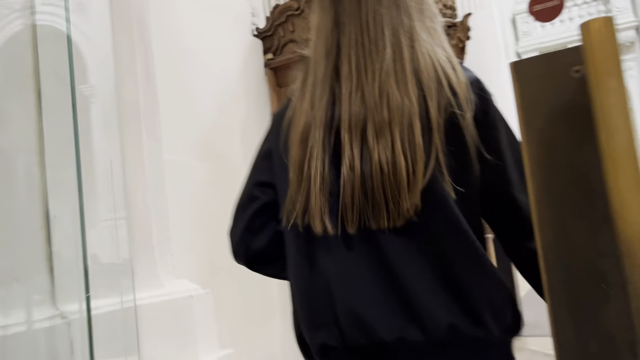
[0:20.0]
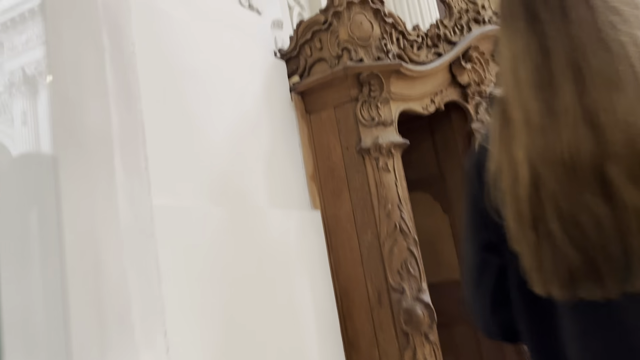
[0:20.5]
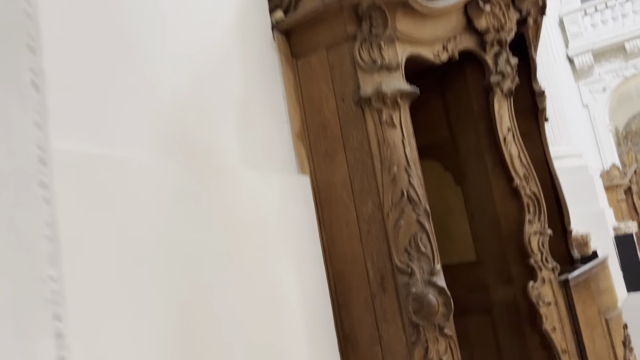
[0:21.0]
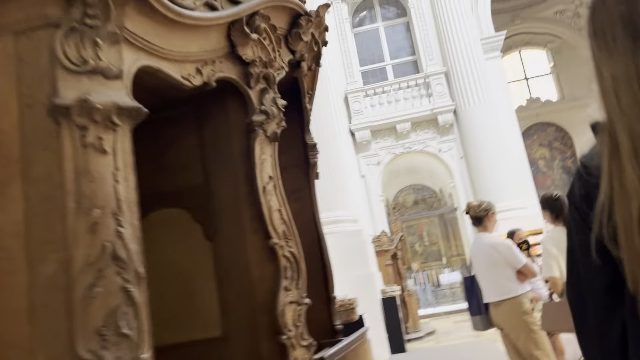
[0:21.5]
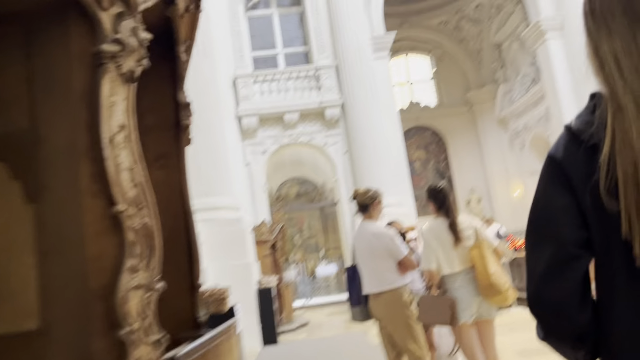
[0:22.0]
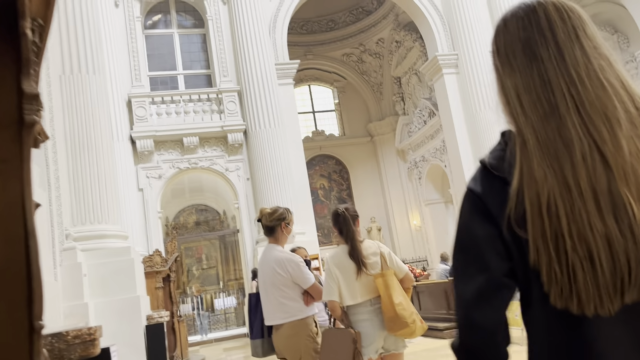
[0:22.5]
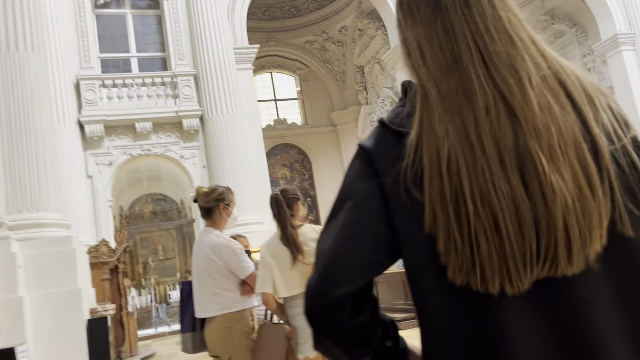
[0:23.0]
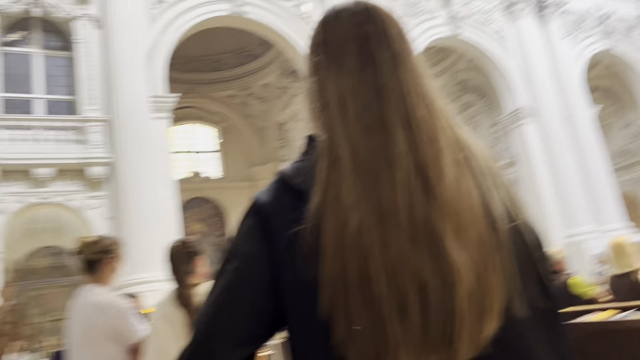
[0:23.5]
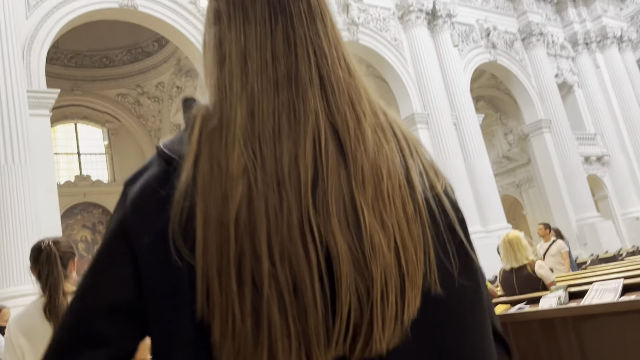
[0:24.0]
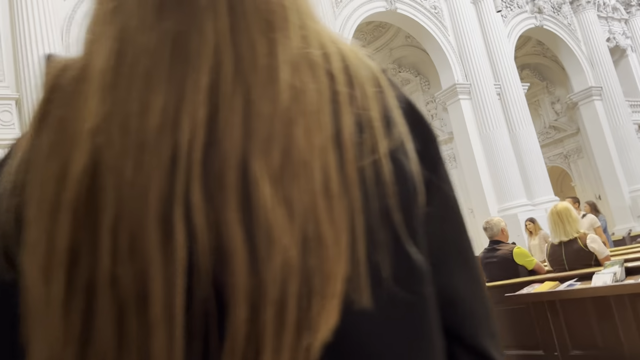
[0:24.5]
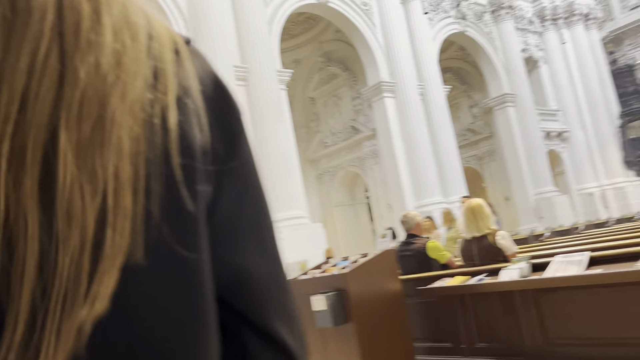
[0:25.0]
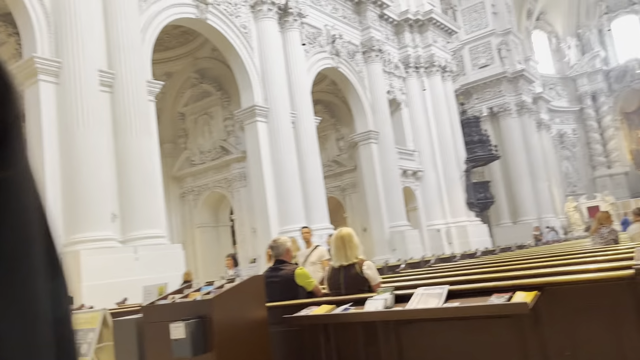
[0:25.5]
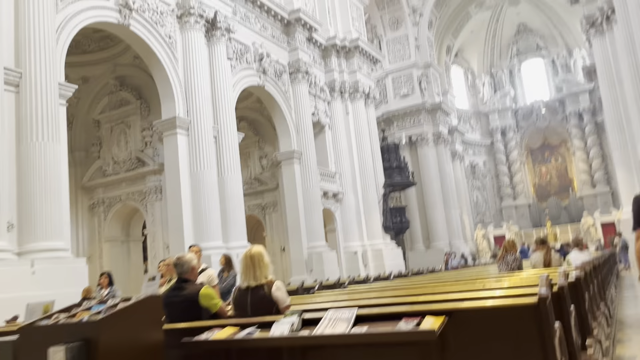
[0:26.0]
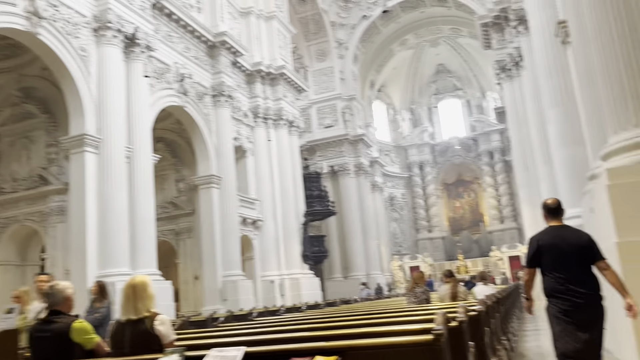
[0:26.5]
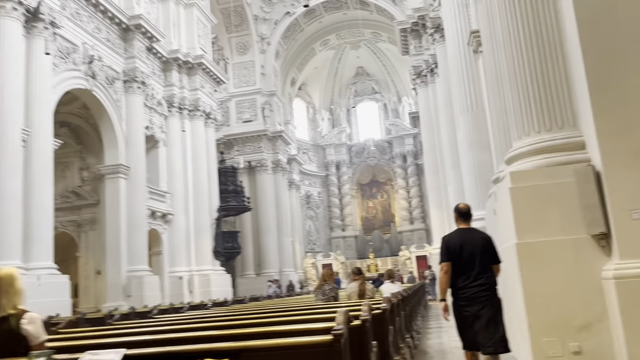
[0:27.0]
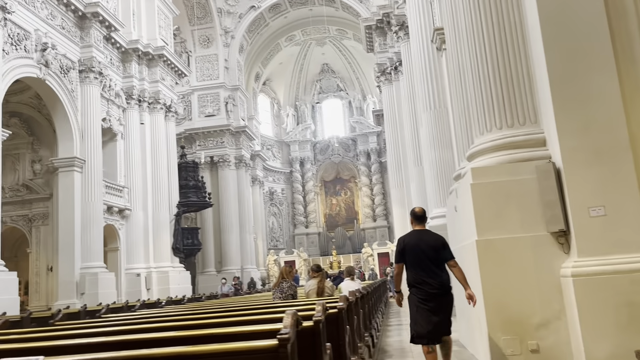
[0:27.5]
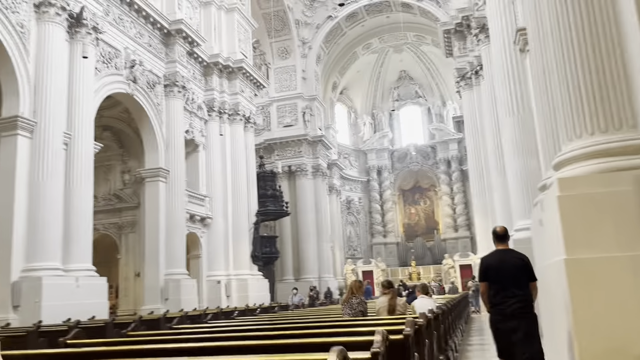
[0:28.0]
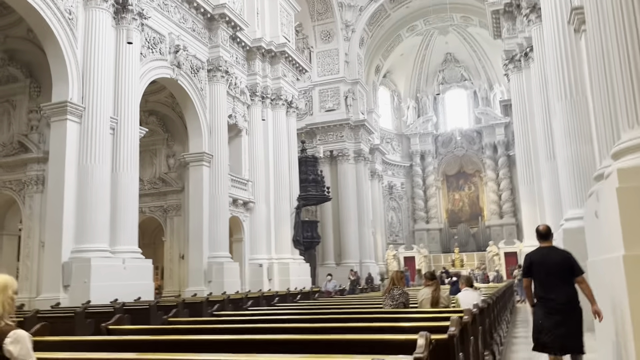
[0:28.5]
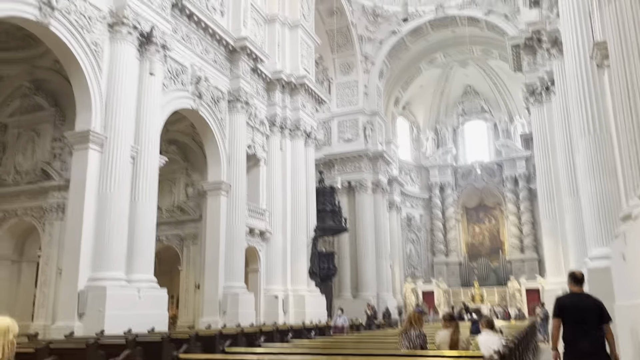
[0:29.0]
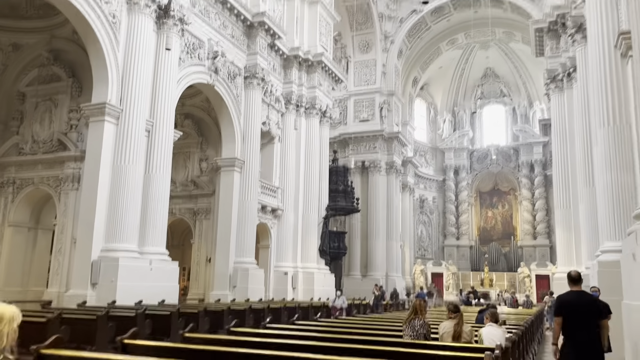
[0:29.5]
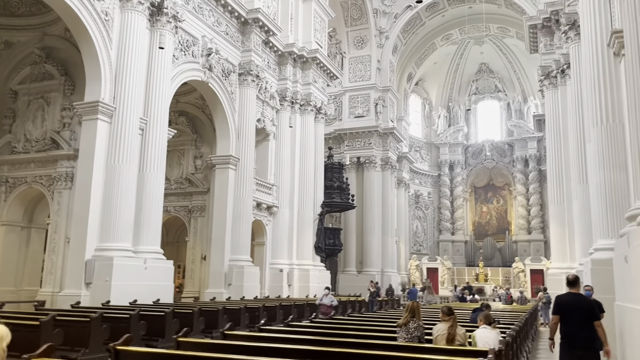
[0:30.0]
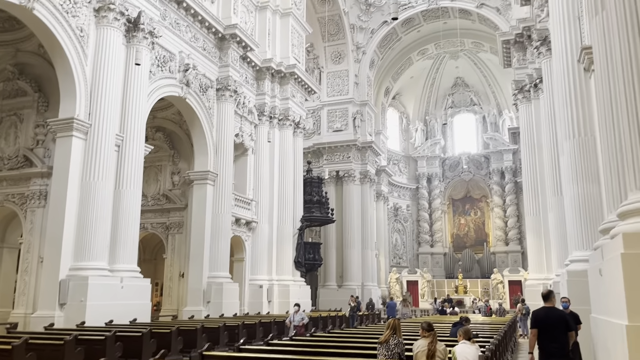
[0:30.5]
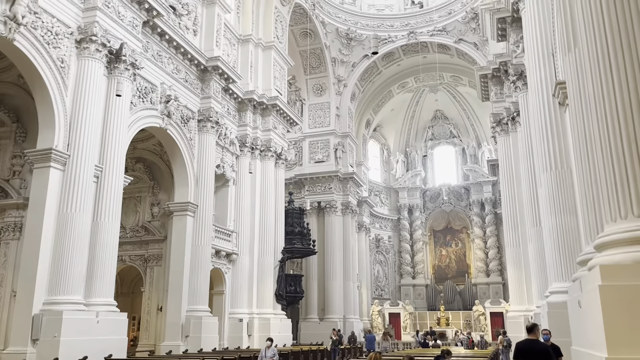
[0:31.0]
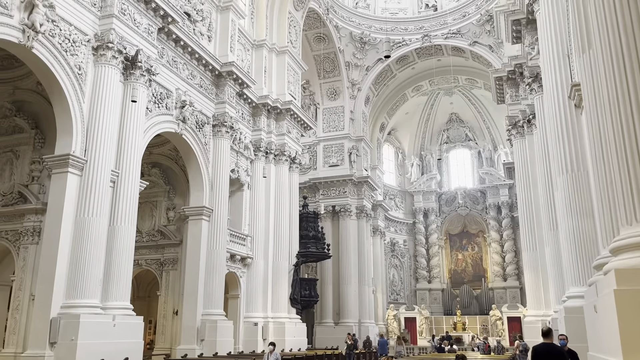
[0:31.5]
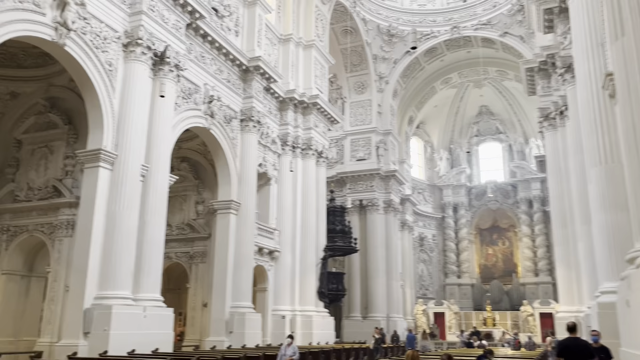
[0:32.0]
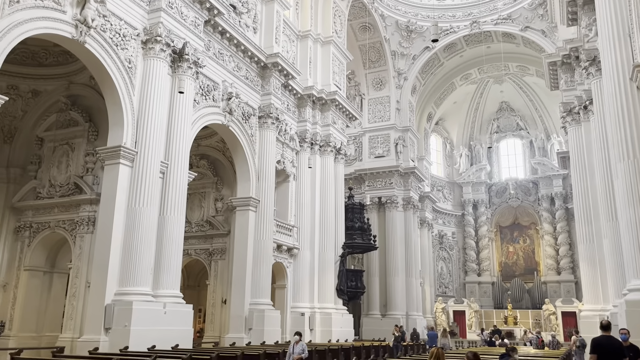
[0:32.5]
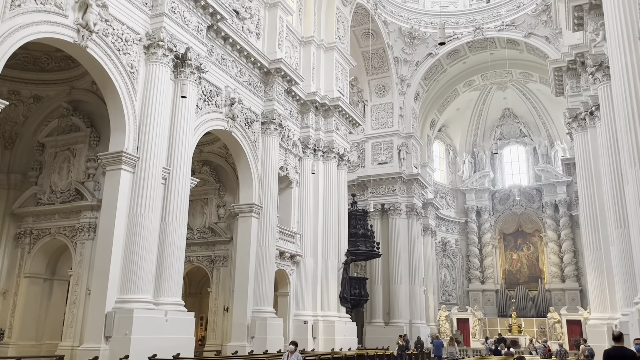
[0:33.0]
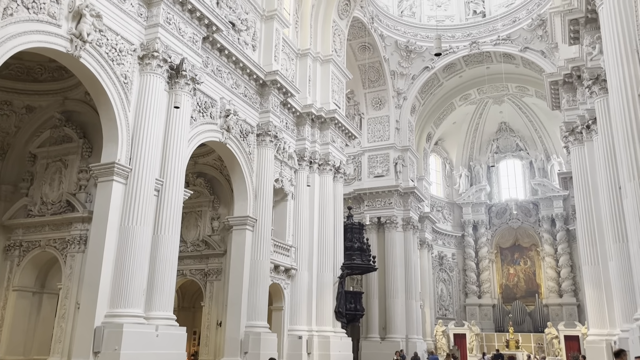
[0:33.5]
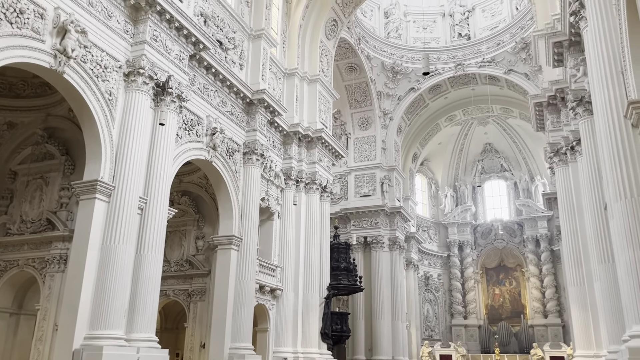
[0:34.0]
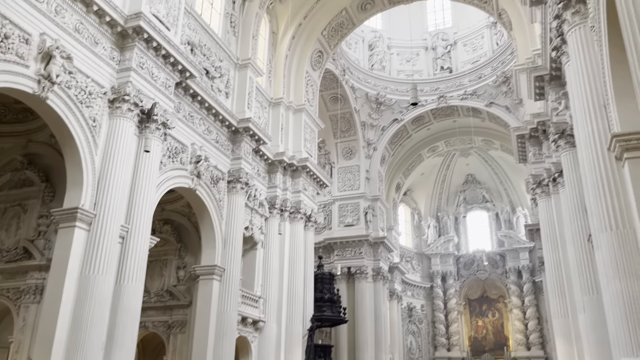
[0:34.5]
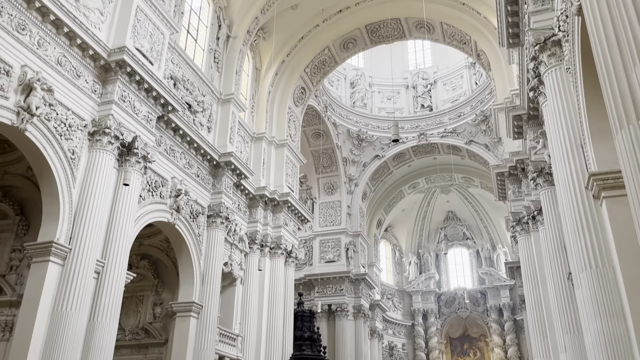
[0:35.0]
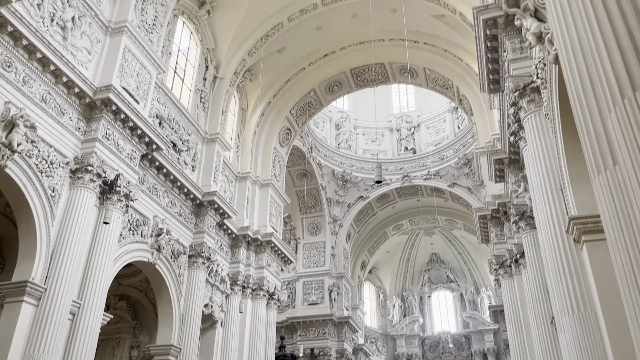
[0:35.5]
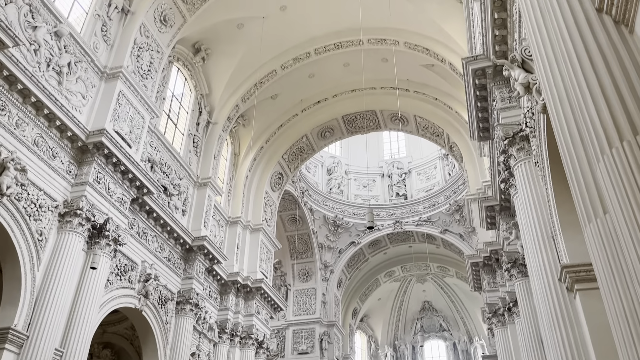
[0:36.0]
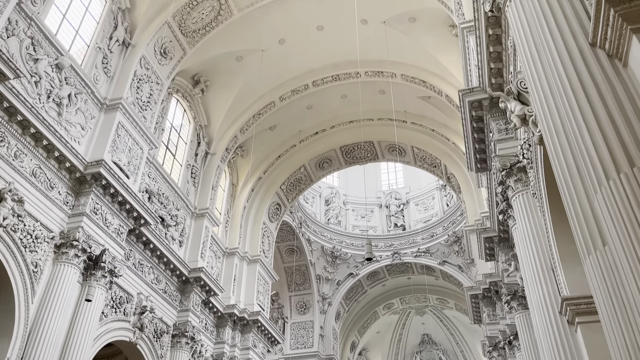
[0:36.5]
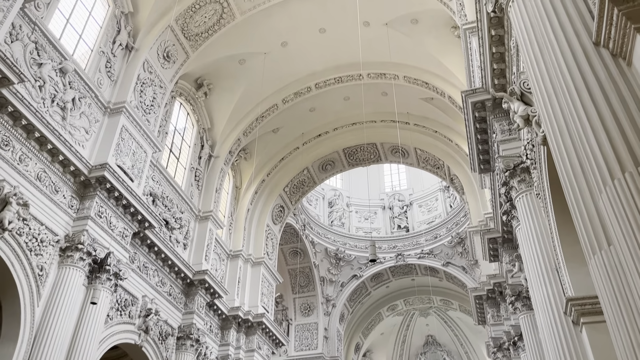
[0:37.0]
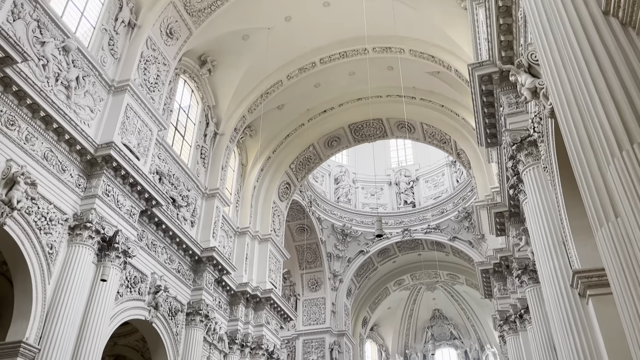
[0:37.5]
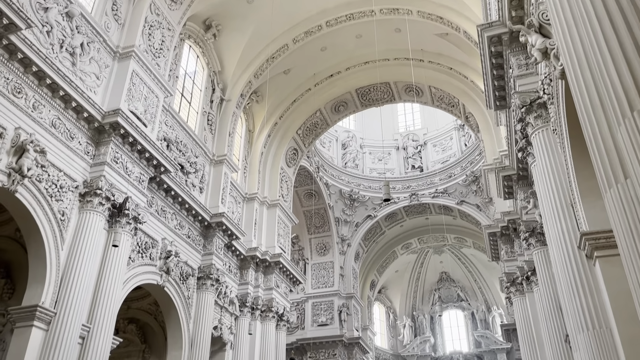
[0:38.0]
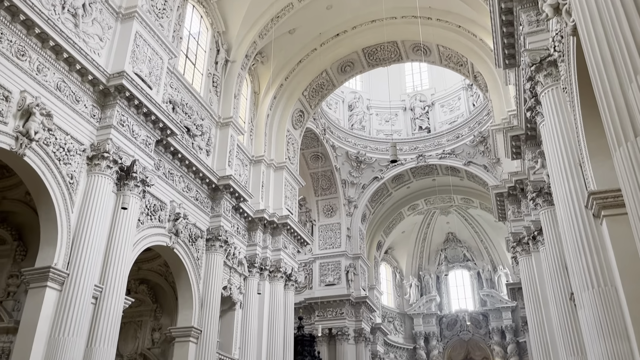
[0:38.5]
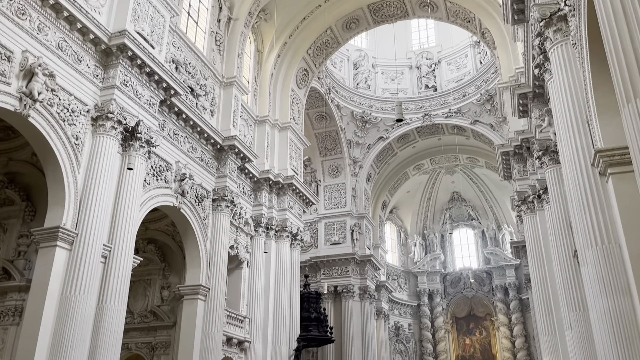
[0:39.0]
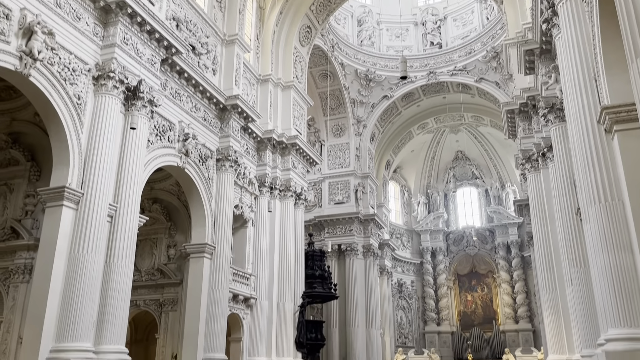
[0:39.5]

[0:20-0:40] The interior of a church, which appears to be old, contains a lot of artwork, such as carvings, stone pillars and arched doorways. Pews are in the center, all of them in the middle, with two walkways, one on each side. The columns are huge and the space is huge, with an extremely high, arched ceiling. Wood carvings are against the wall. Up top in the center of the ceiling there is a tier, and at the upper arch there is another level that appears to be round, with a fence like a banister to protect it. There are multiple archways and large columns that look like white marble. People are in the cathedral. Most of the architecture, both the stone and the wood, looks hand-carved.